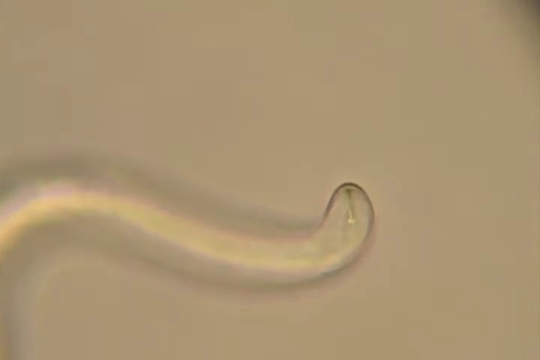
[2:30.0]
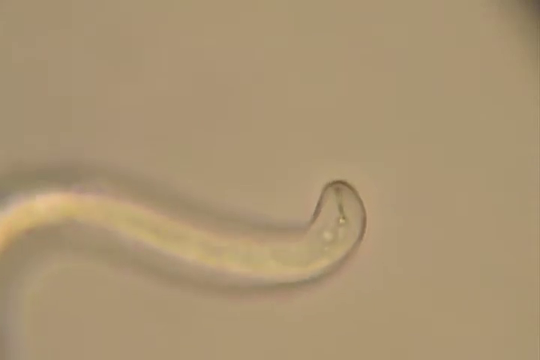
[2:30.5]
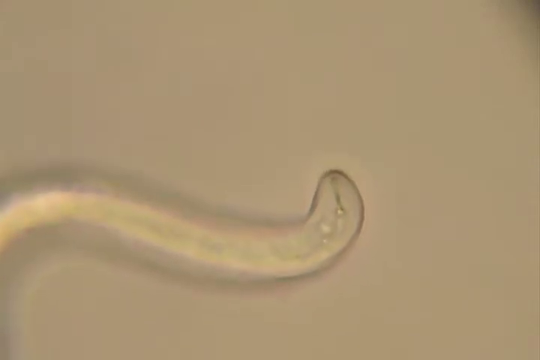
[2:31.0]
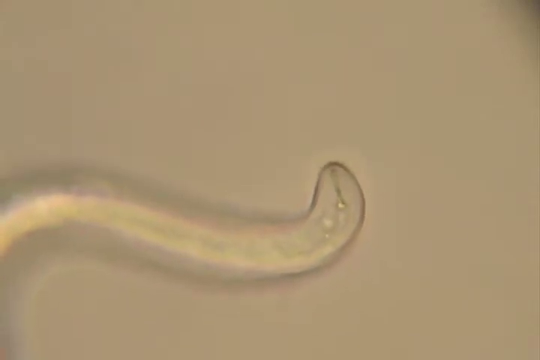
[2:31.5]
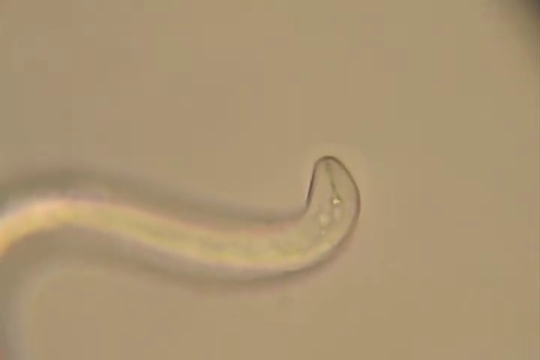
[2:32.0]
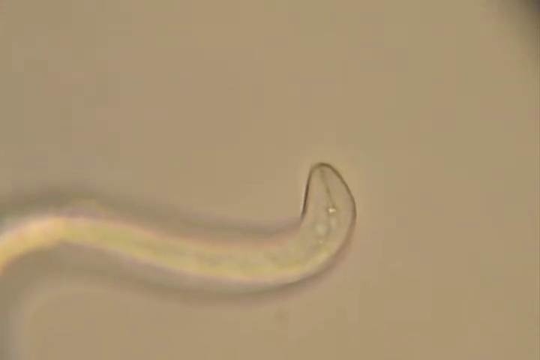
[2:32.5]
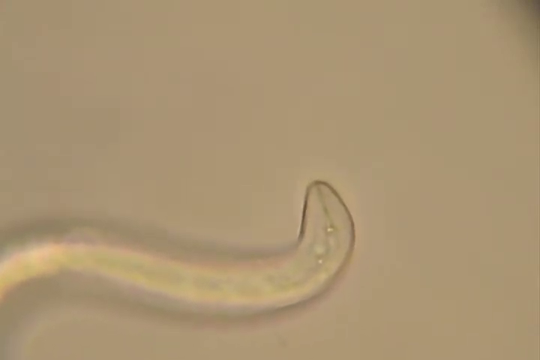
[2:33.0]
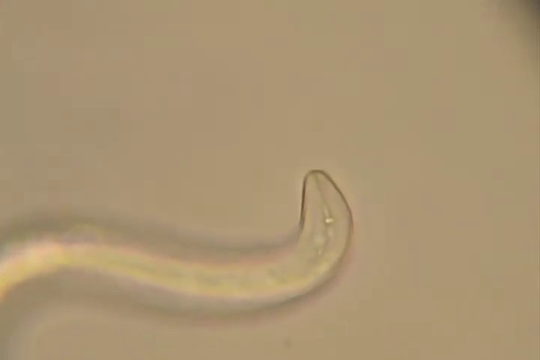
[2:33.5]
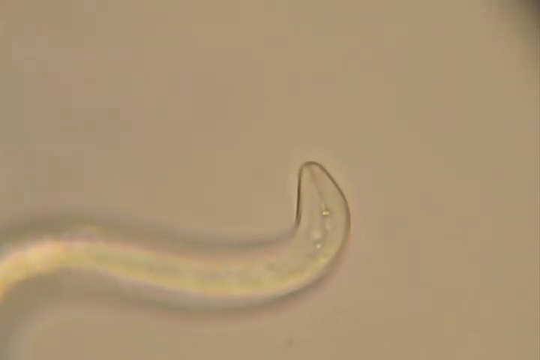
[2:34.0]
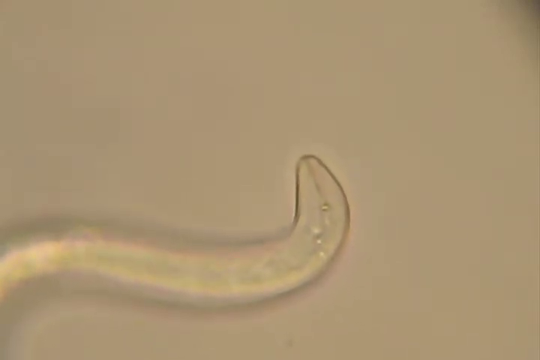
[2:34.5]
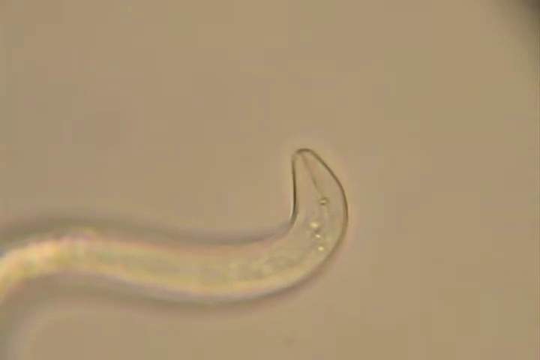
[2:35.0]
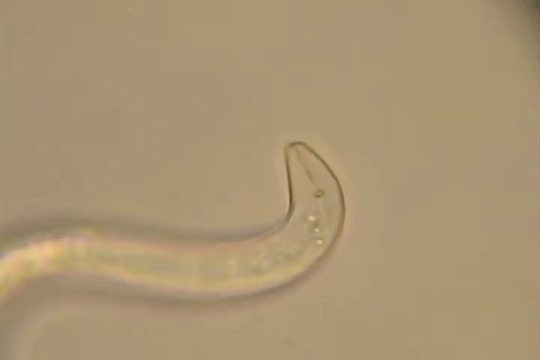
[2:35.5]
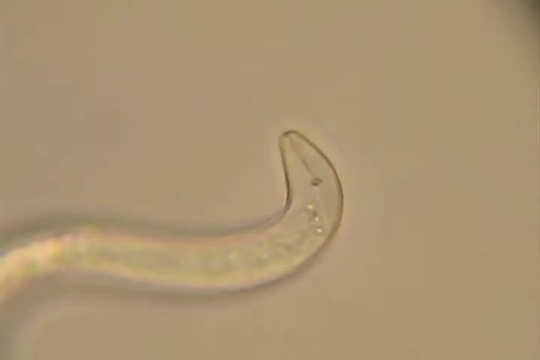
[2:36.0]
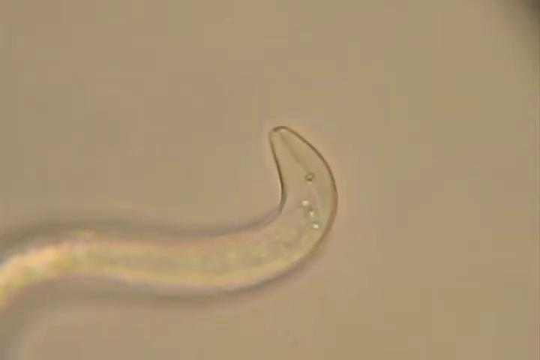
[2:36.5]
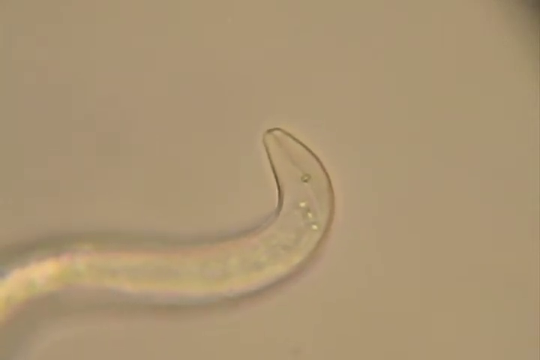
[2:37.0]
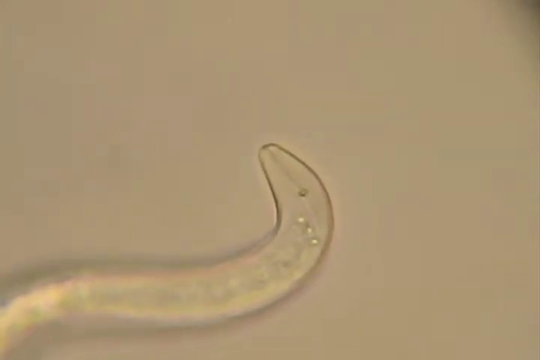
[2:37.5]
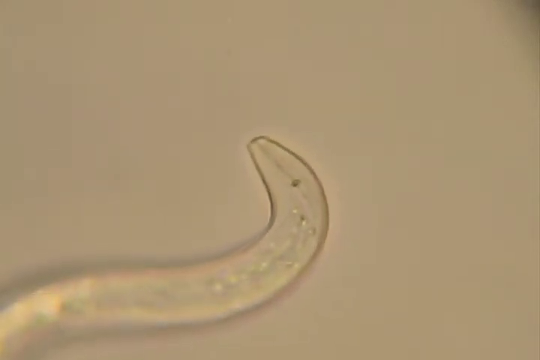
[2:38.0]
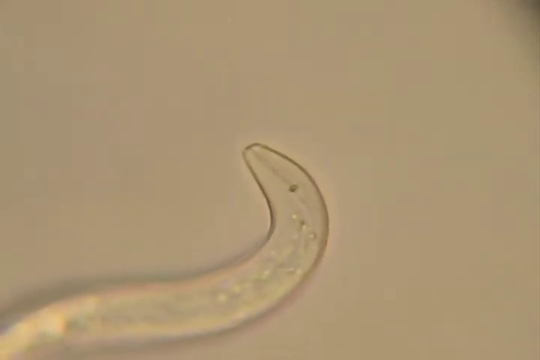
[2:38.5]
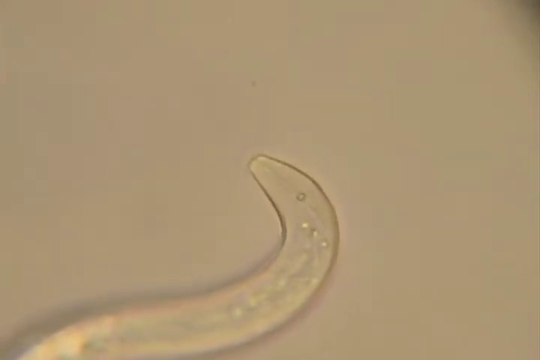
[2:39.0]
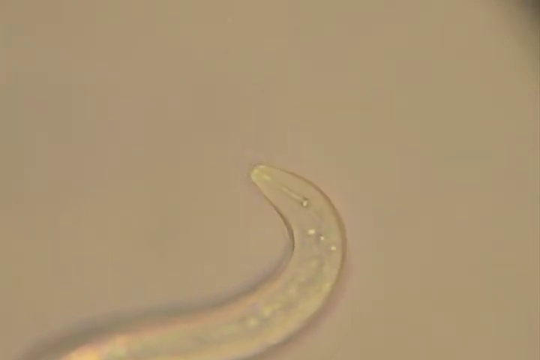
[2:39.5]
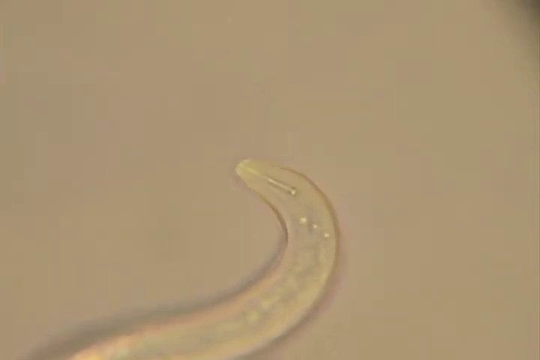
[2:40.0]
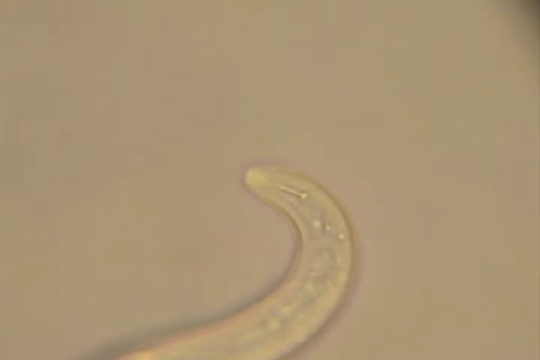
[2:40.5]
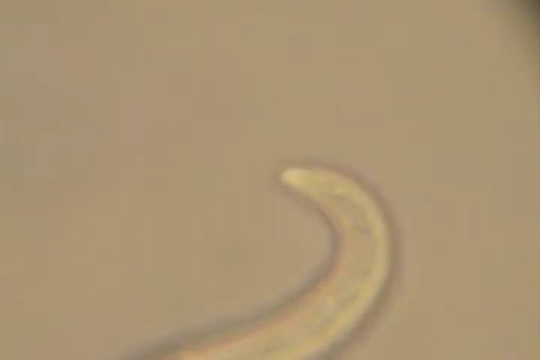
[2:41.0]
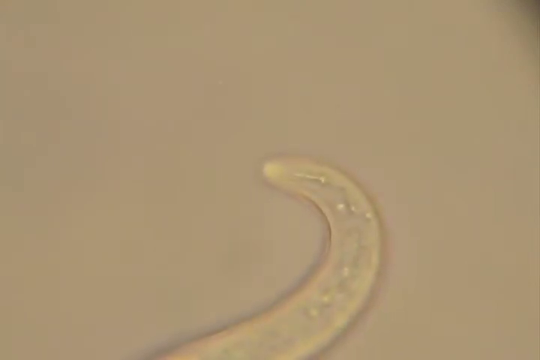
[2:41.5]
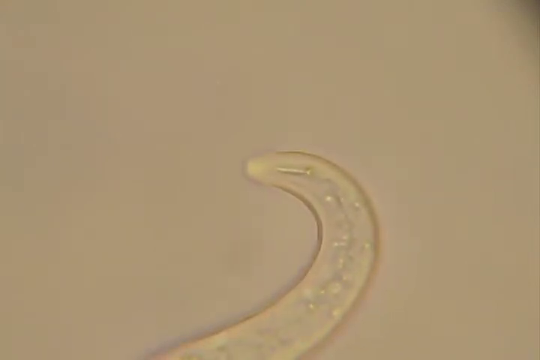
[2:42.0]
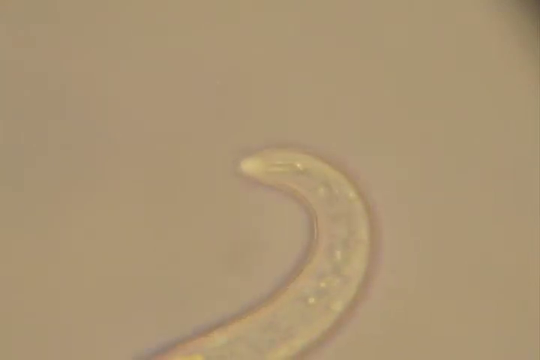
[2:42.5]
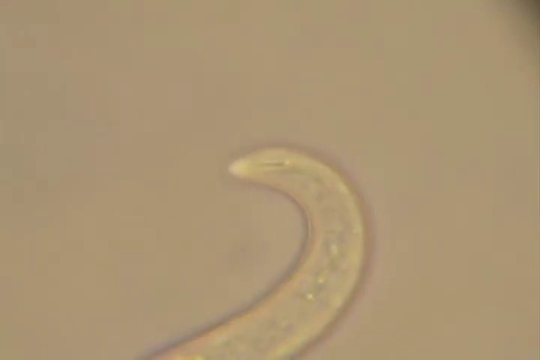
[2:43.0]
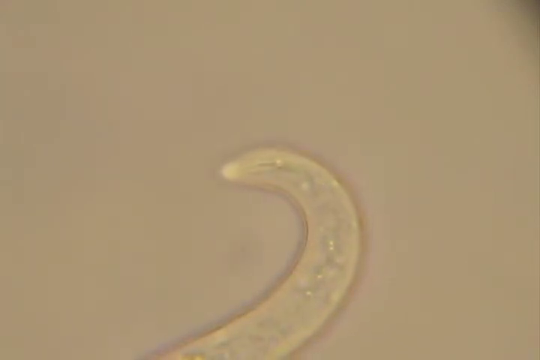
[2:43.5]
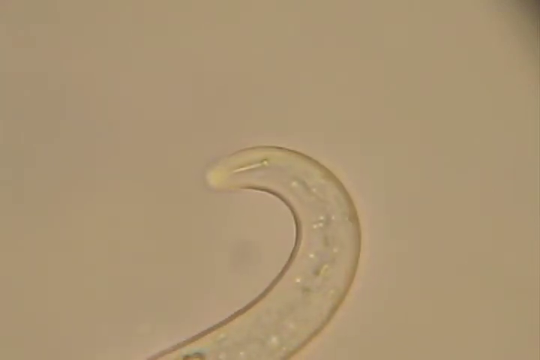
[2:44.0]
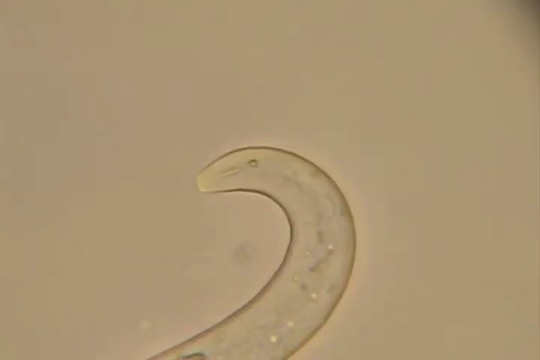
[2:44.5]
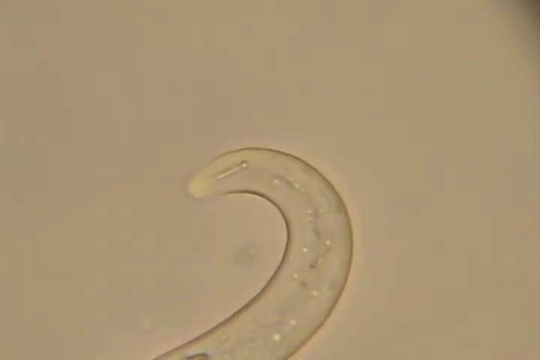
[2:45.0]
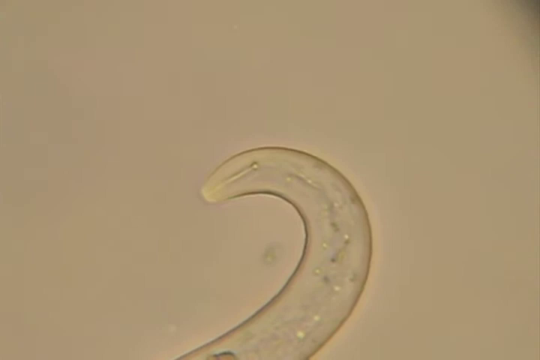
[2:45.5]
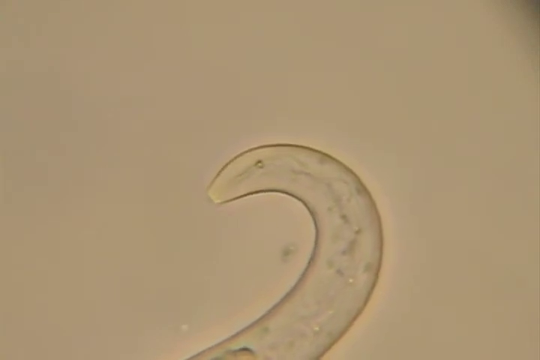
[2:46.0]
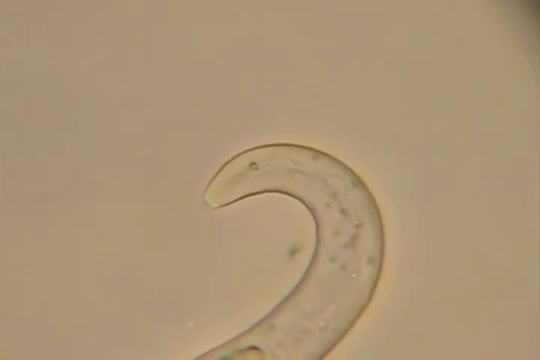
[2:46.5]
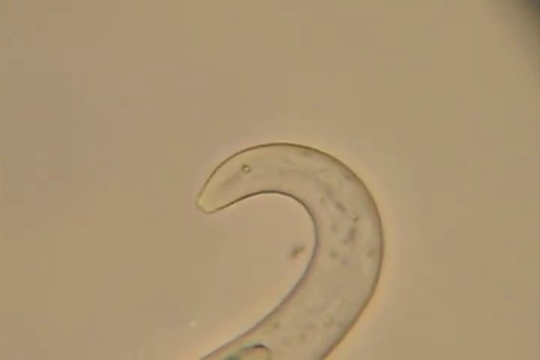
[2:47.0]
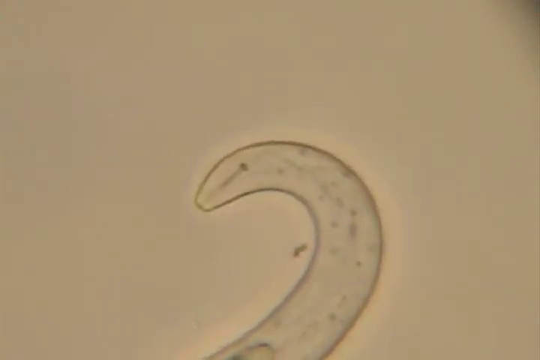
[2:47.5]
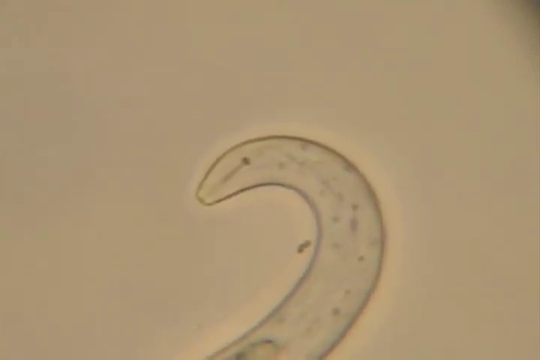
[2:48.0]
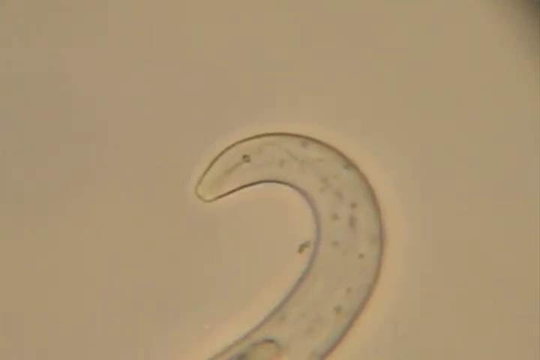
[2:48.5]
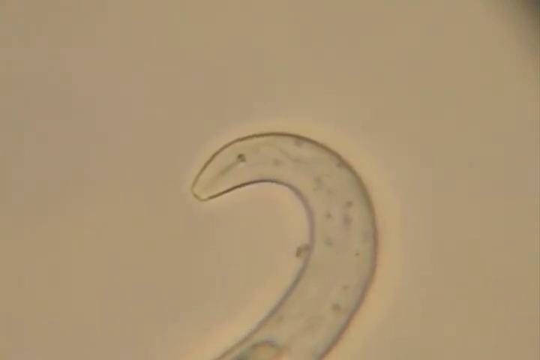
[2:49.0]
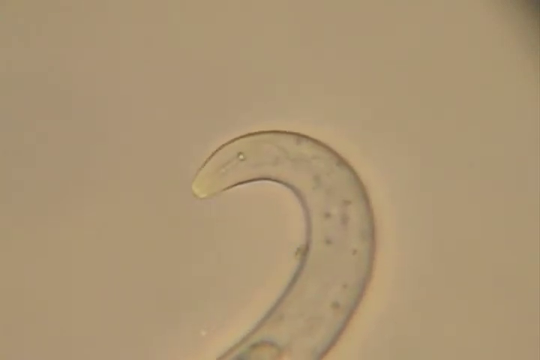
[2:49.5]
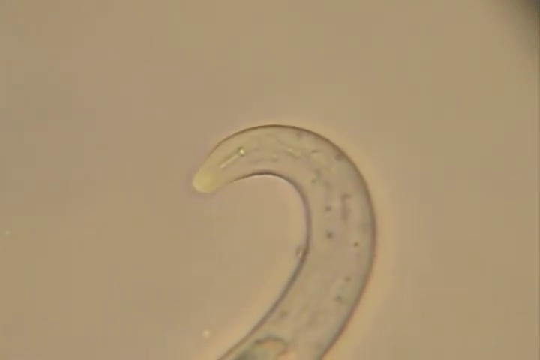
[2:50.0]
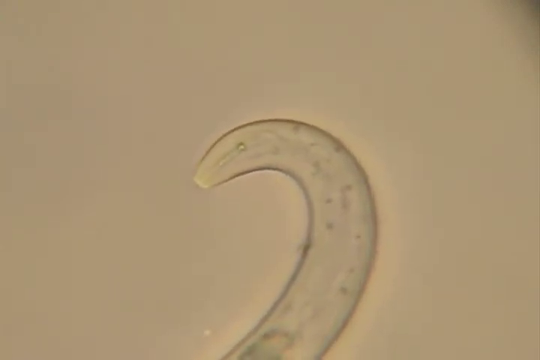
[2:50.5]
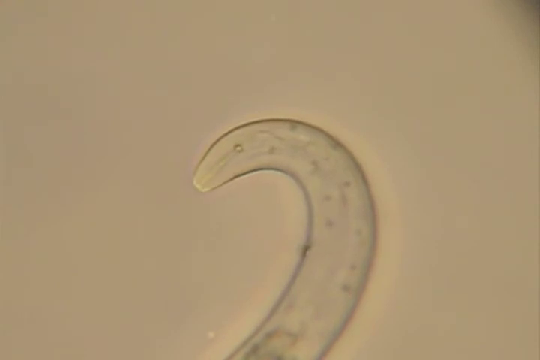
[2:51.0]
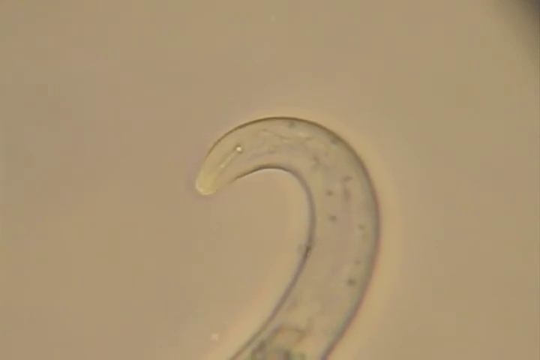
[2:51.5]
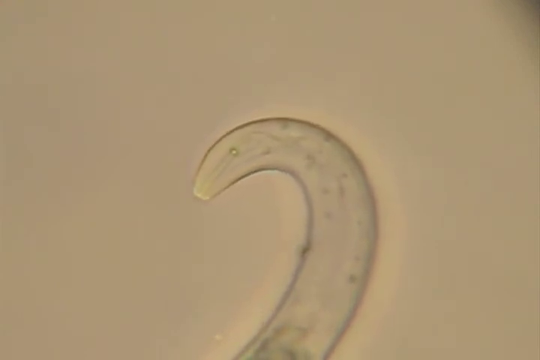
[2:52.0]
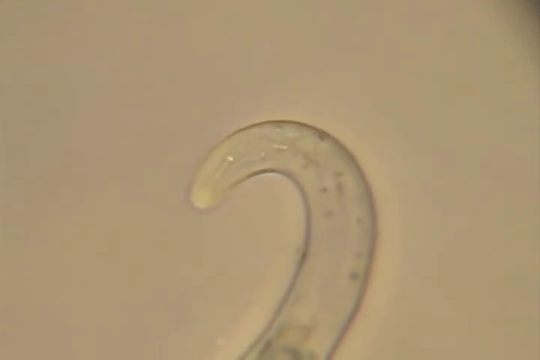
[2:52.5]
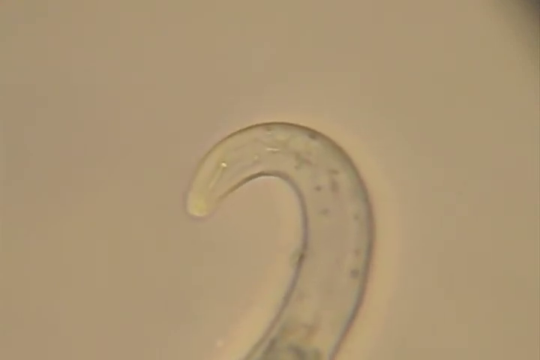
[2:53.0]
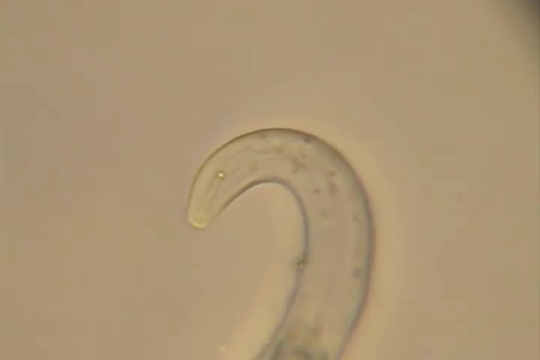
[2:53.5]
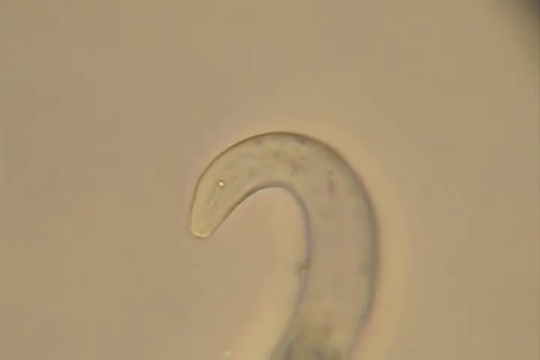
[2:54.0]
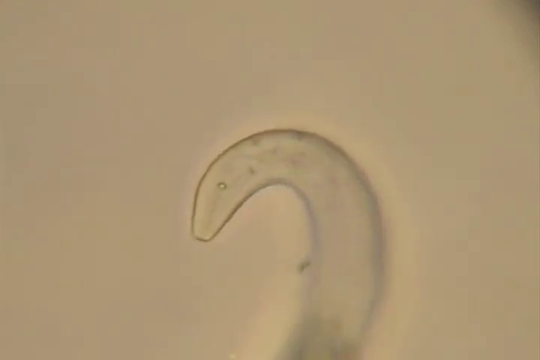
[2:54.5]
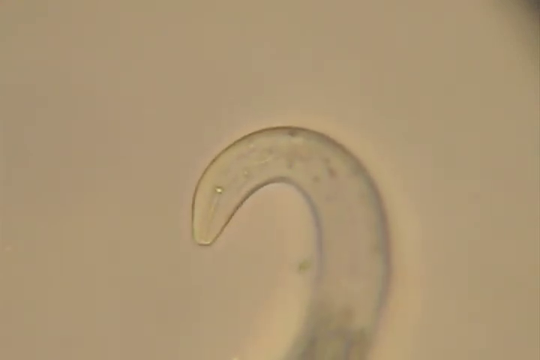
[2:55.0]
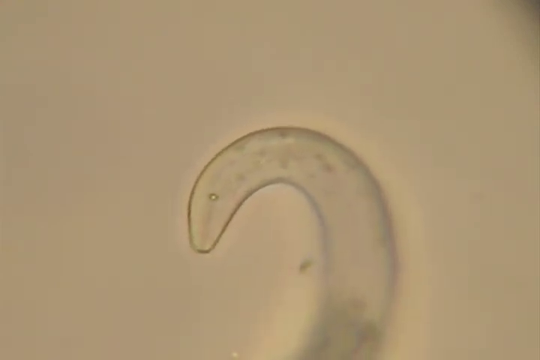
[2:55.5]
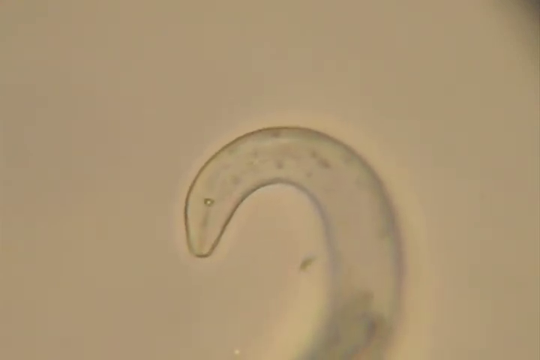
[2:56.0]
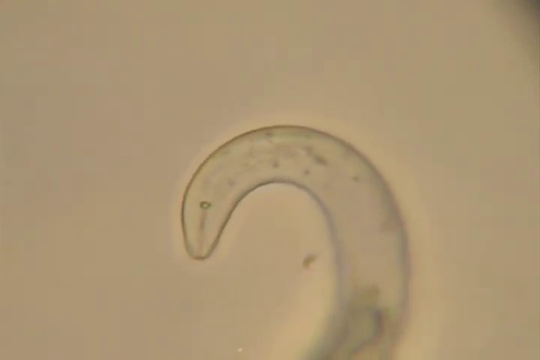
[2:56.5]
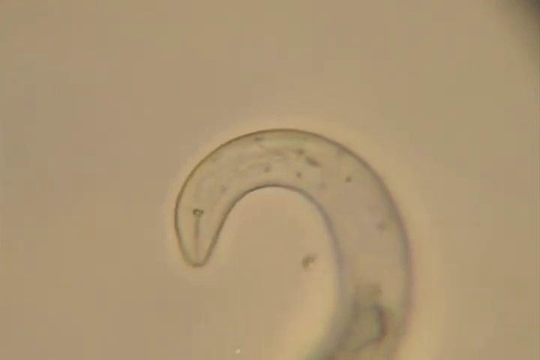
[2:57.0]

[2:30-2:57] A long piece of what seems to be a root is shown, closing off at the end. Its overall shape appears snake-like or like an S. At the tip there is a black outline with a small black piece inside. The root moves upward and to the left. Small white dots and gray lines are inside the shape. It bends heavily to the left and briefly goes in and out of focus. When it focuses fully, the entire outline of the shape is black. What looks to be an eye is on the side of the root, and a white line runs into the eye-like shape from the start of the root where it tapers at the tip.